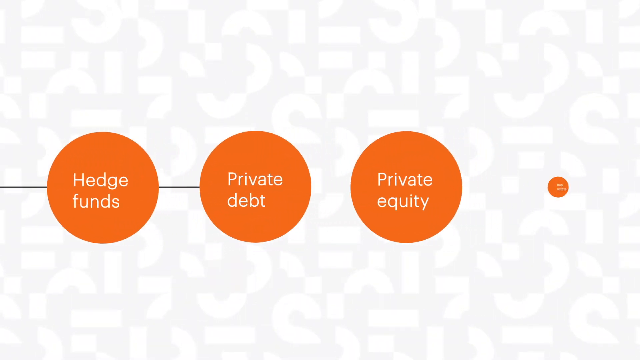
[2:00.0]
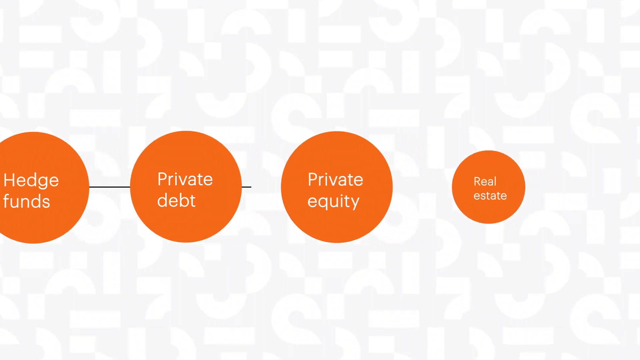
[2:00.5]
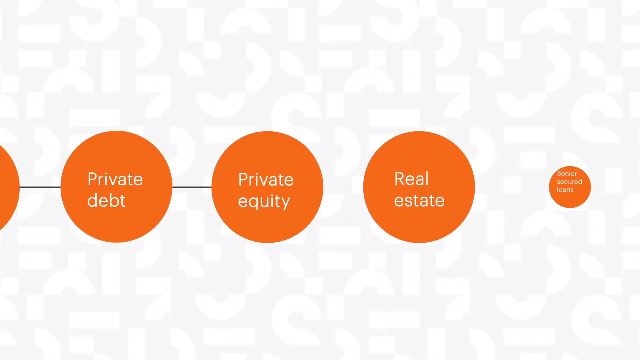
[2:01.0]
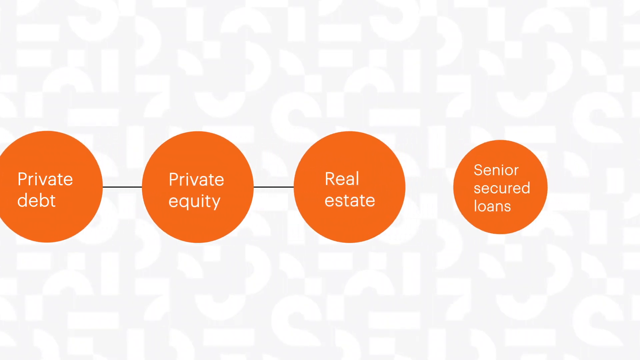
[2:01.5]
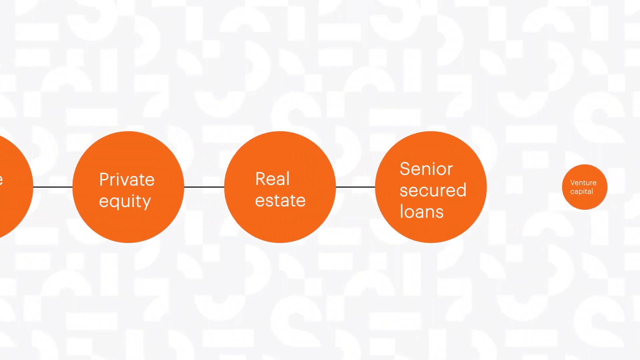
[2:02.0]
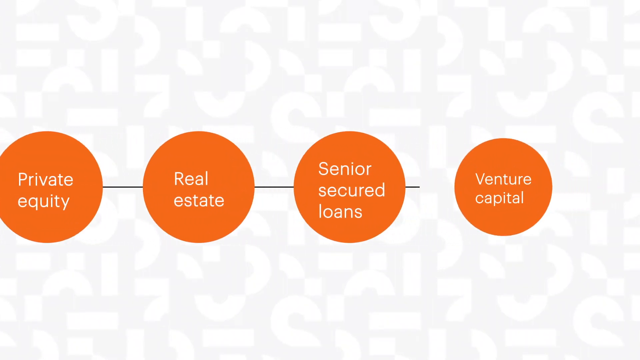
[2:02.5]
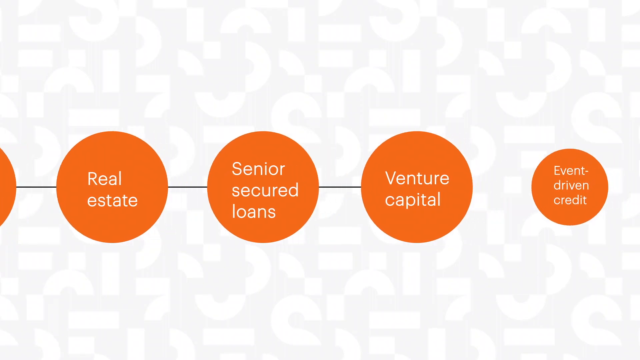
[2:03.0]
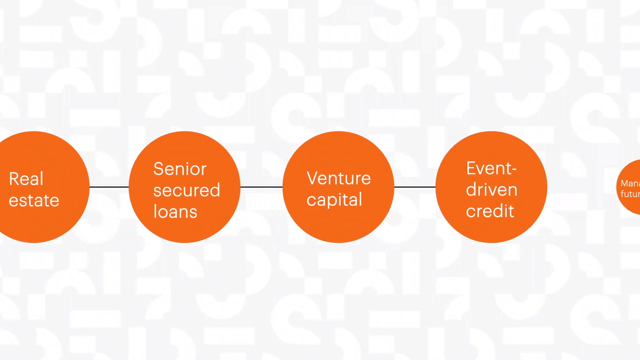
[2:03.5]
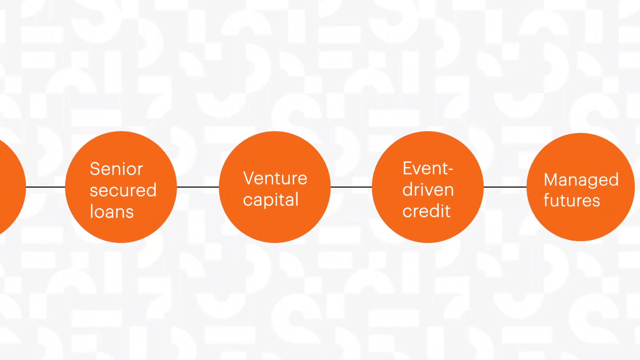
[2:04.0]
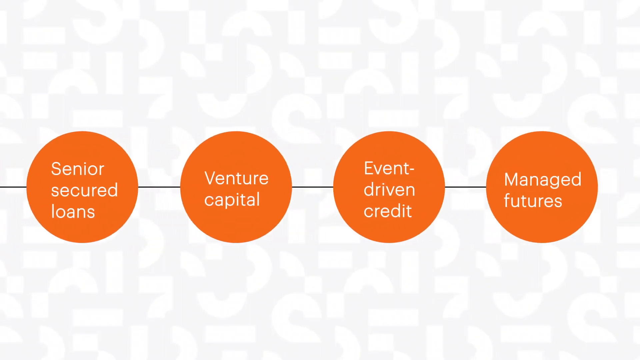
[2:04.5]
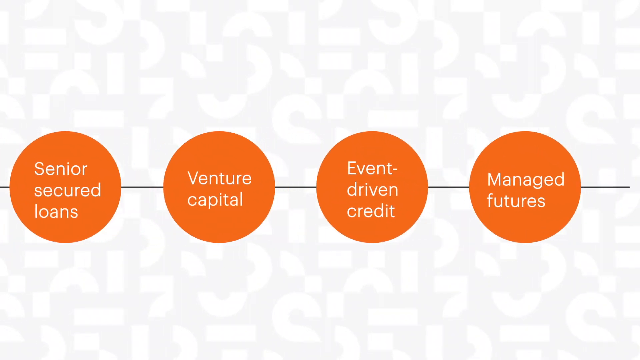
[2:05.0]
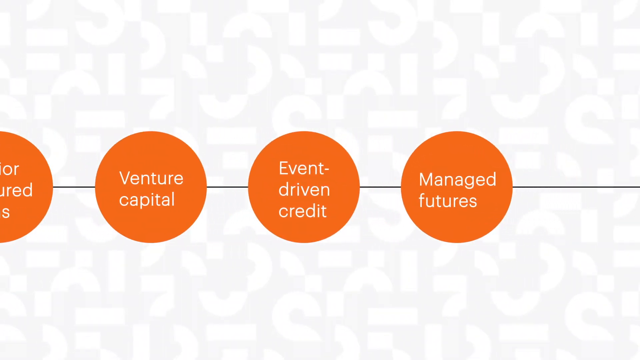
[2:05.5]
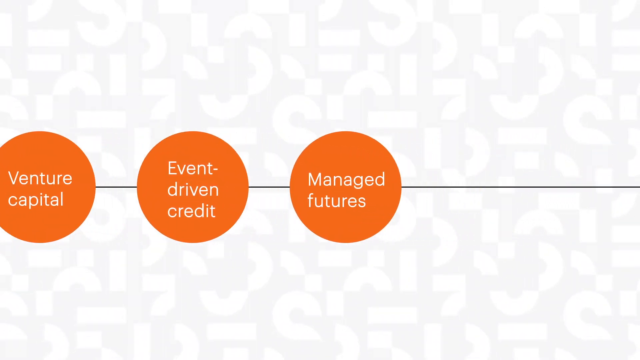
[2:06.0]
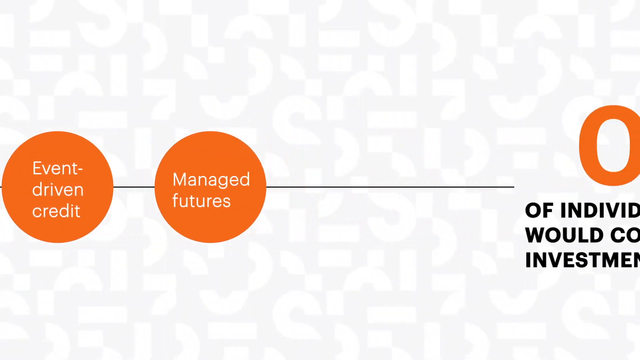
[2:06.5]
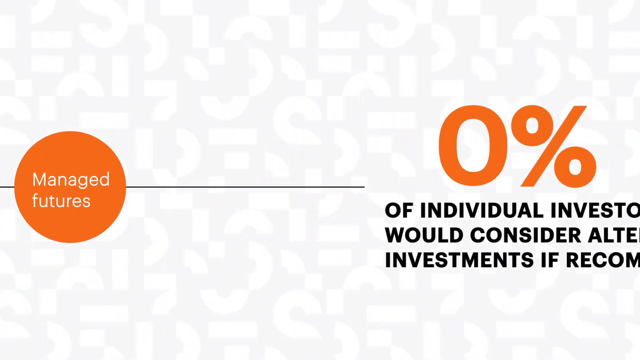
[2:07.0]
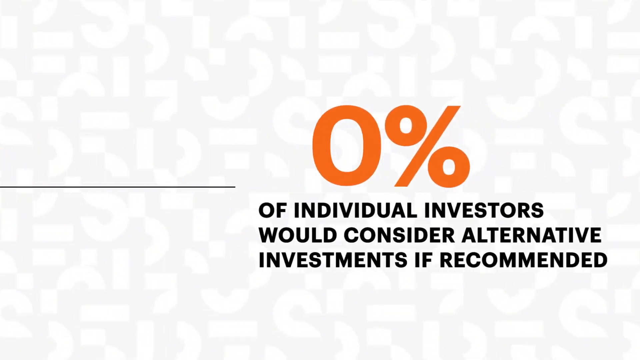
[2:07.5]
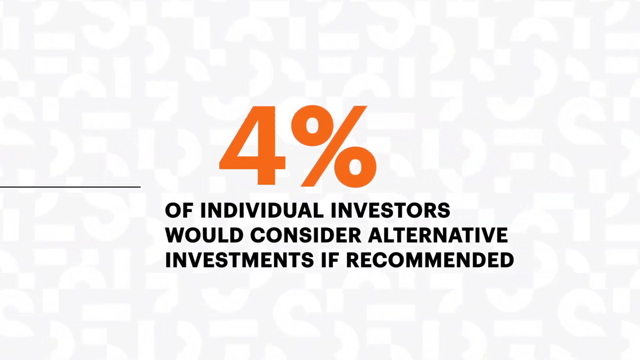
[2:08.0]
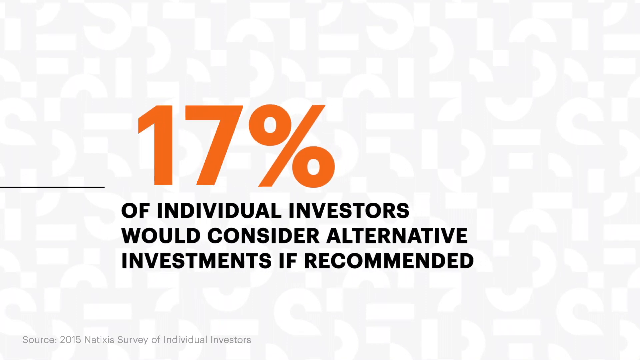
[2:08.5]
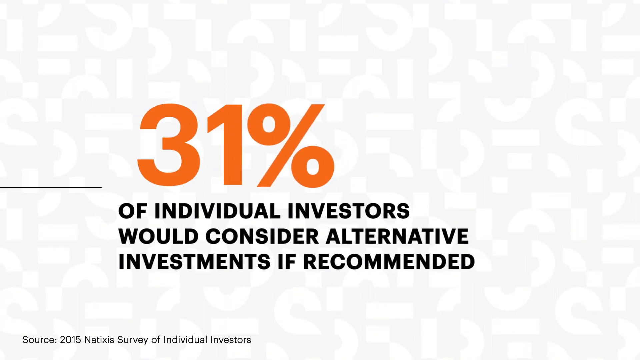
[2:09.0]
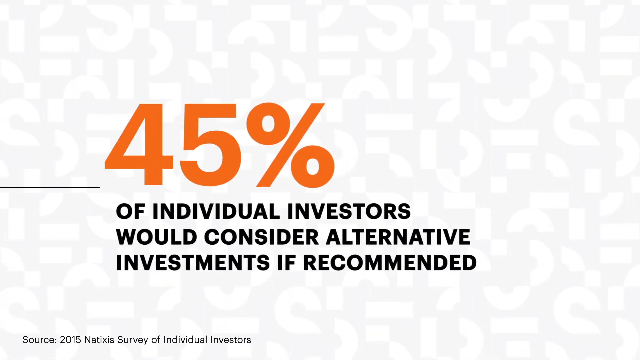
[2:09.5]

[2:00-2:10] Three orange circles with white text inside read "hedge funds," "private debt" and "private equity." A fourth circle appears that says "real estate," and further separate orange circles read "senior secured loans," "venture capital," "event driven credit" and "managed futures." A black line connects all of them like a strand of beads, and the background is clean white. The screen scrolls to the right and the line stops. A bright orange percentage rapidly climbs until it reaches "59%," and underneath, black all-caps text reads "of individual investors would consider alternative investments if recommended," on a plain white background. In the bottom left corner are some credits, apparently in small black text that is a little hard to read, mentioning a 2015 survey.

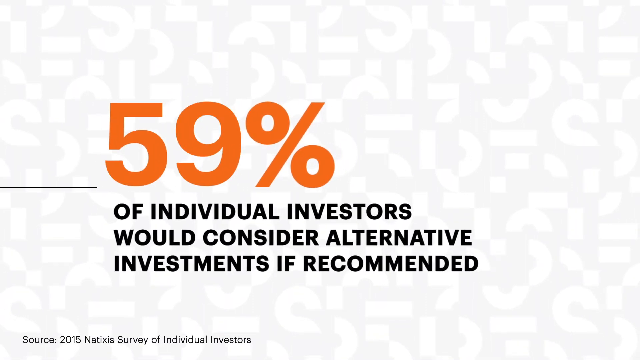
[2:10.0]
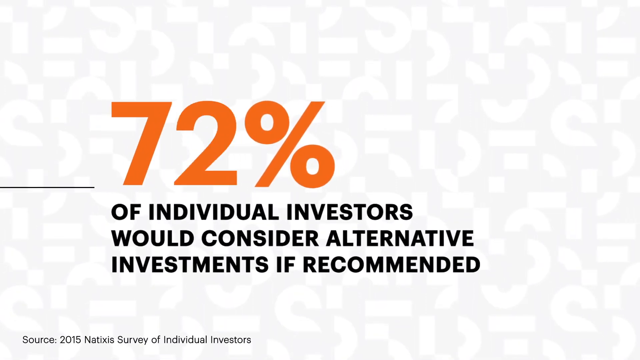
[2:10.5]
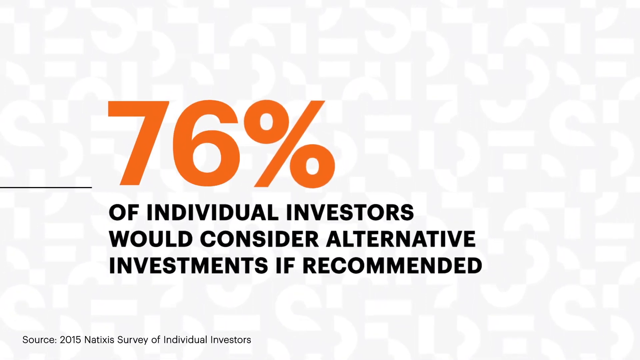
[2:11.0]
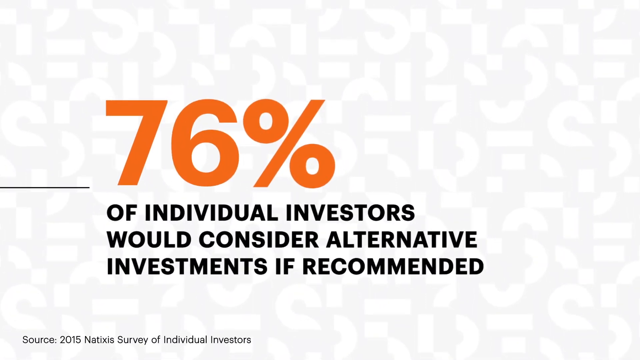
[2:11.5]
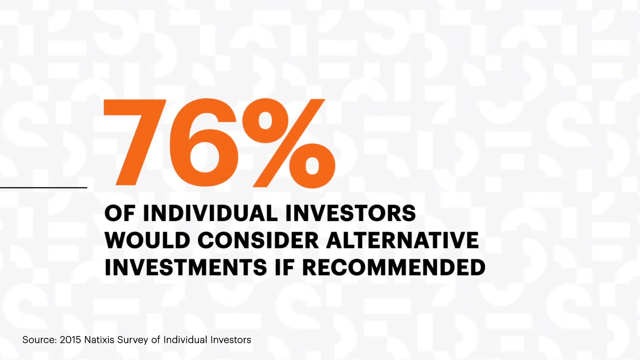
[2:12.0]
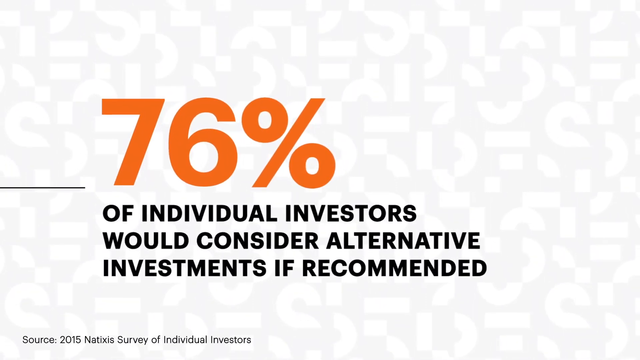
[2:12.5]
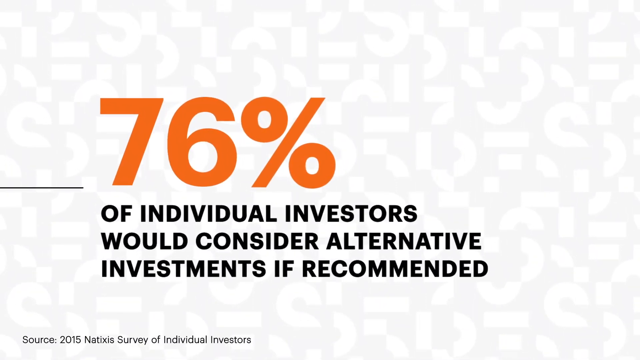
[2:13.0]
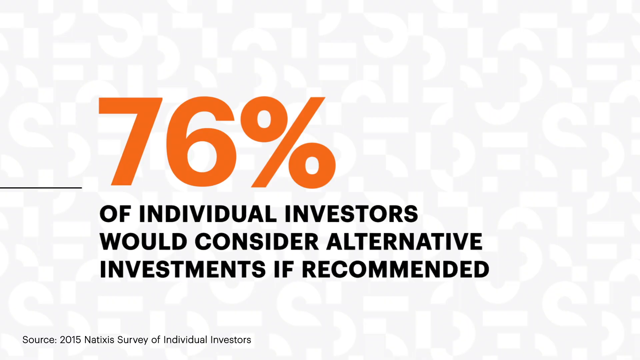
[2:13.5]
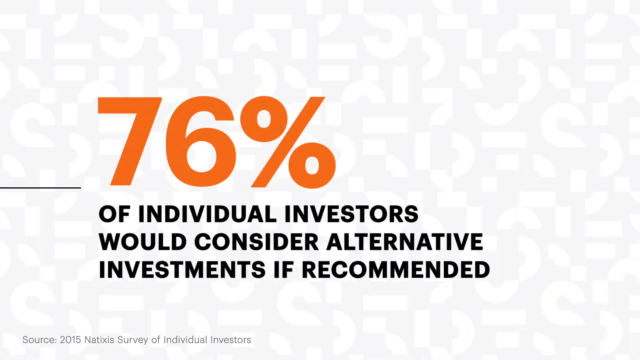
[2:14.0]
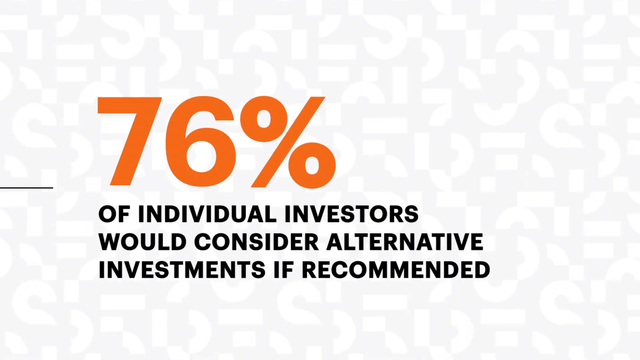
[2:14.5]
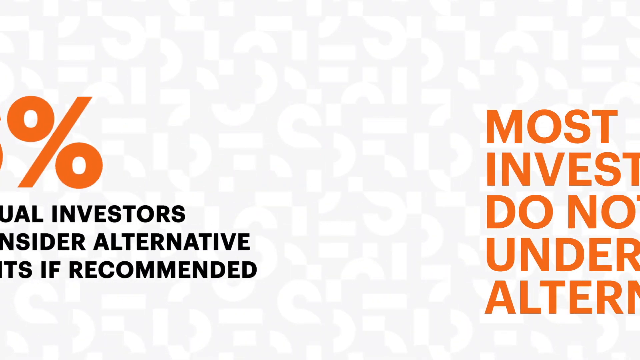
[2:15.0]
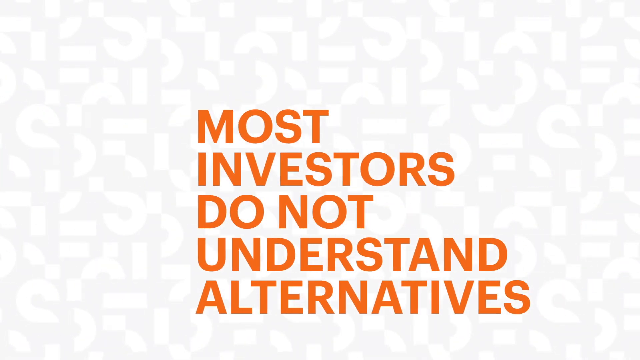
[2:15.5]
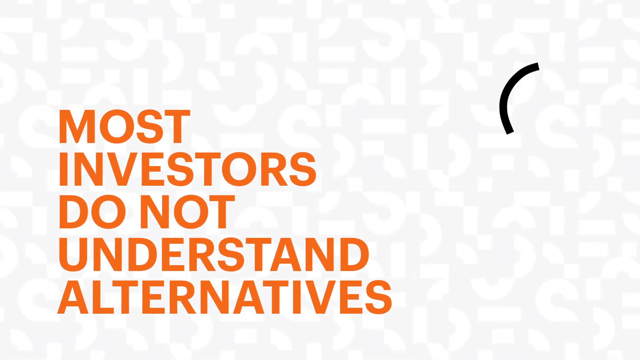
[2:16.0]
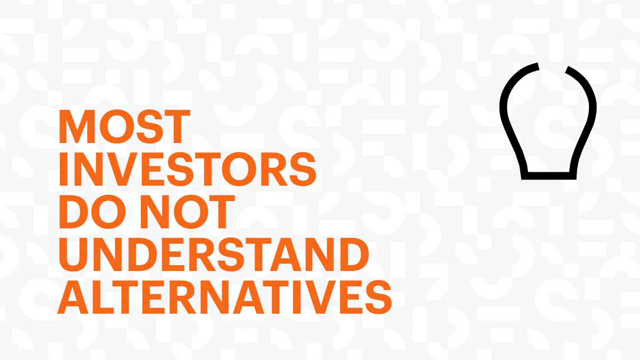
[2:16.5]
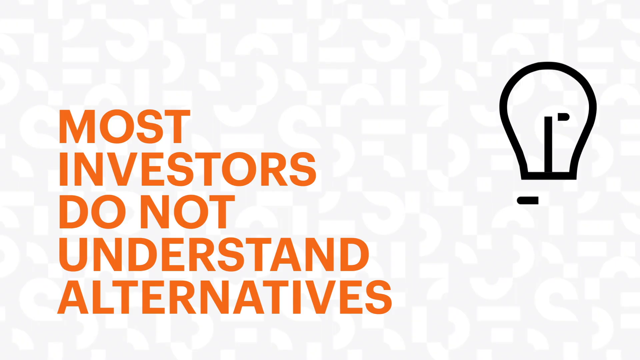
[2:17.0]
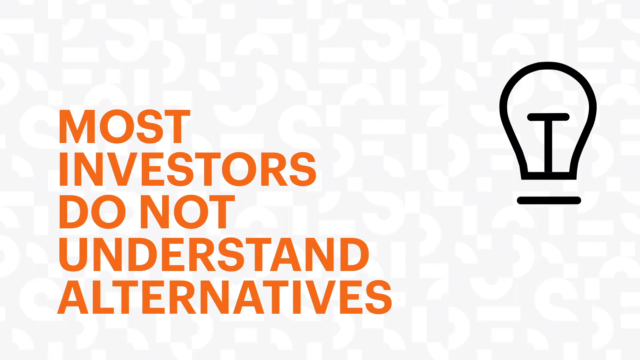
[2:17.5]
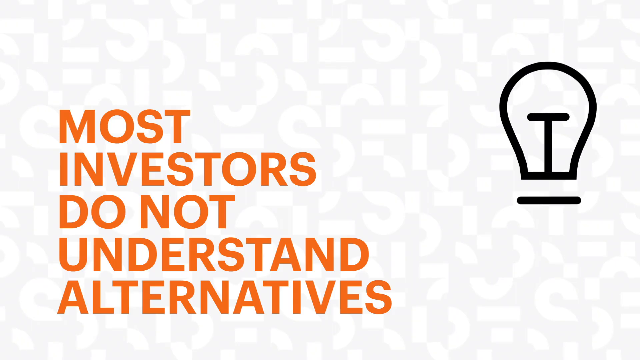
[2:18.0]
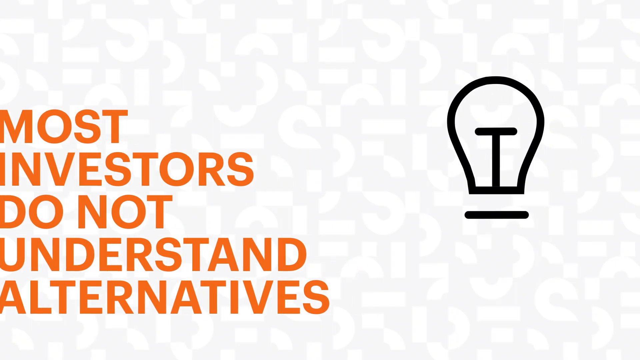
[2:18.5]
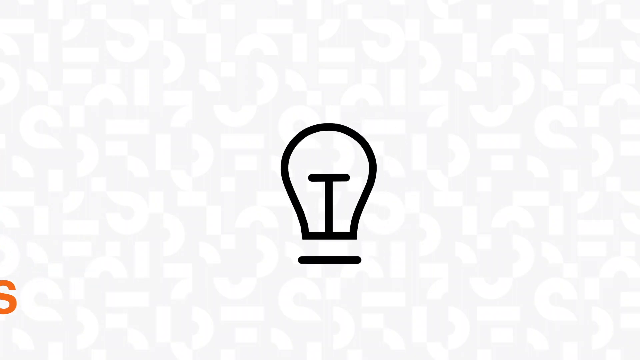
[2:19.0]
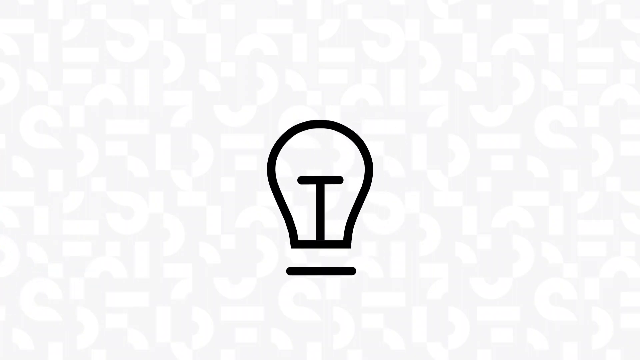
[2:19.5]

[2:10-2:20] The screen reads "76% of individual investors would consider alternative investments if recommended." The percentage is in large orange text that stands out, and the rest of the text is in black all caps beneath it. There is a black line to the left, and the text starts to kind of zoom in. The screen scrolls to the right to show "most investors do not understand alternatives" in large orange all-caps letters, and a black outline of a light bulb appears on the right, animated so it seems to be drawn on the screen in real time. The light bulb moves to the center of the screen and starts to zoom in, all on a white background.